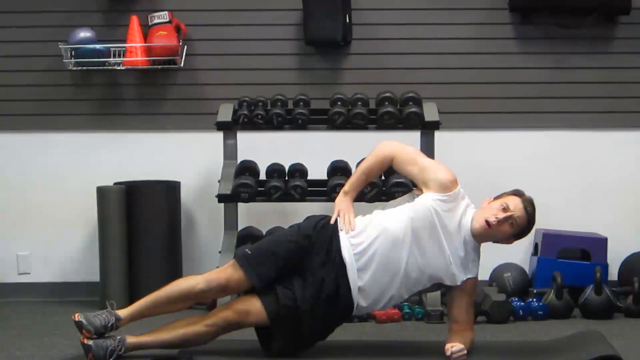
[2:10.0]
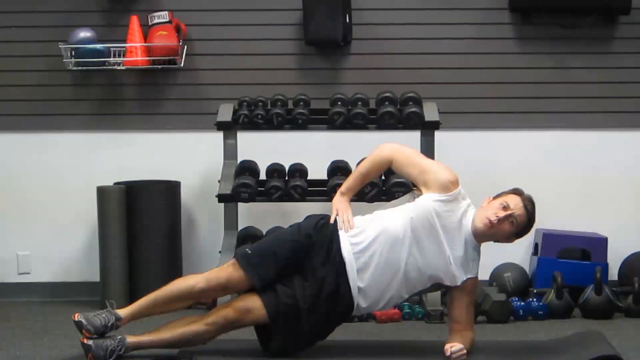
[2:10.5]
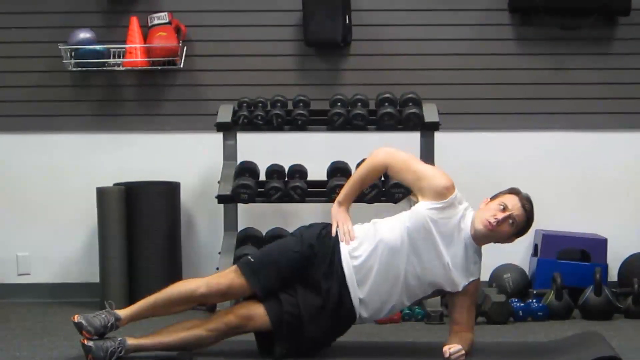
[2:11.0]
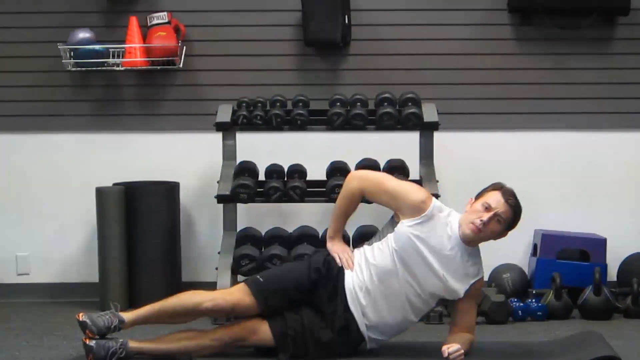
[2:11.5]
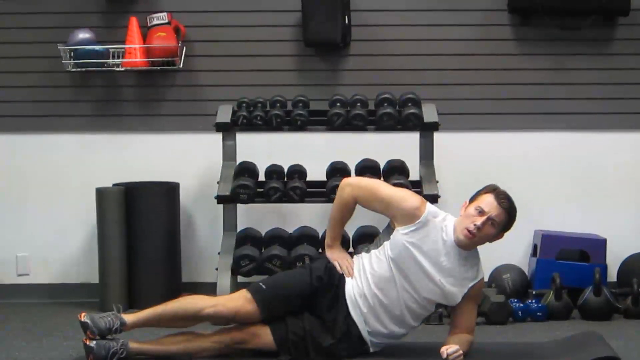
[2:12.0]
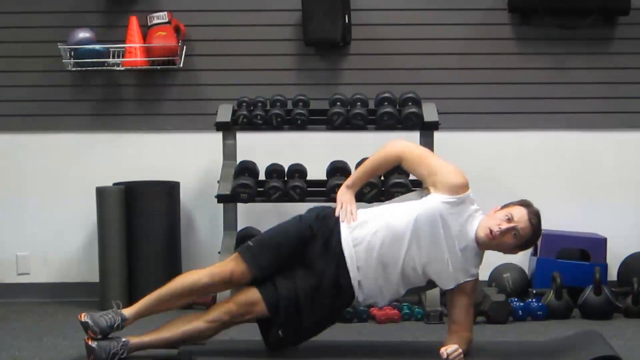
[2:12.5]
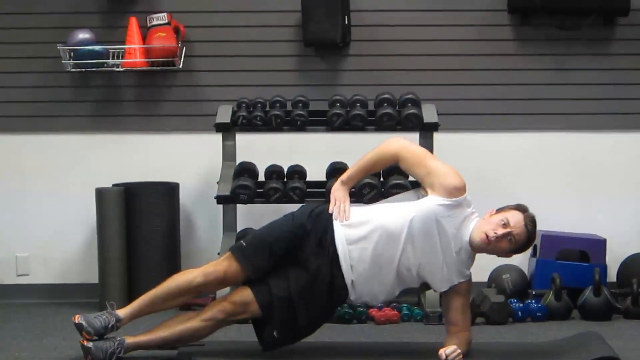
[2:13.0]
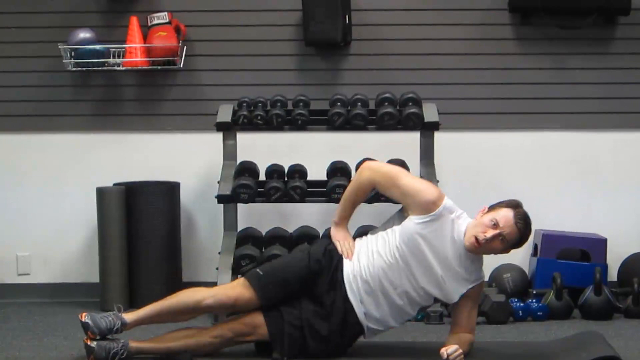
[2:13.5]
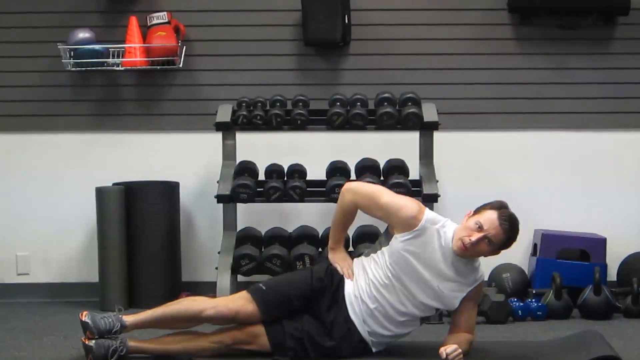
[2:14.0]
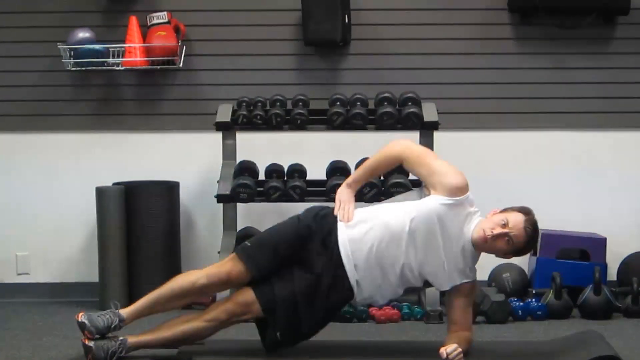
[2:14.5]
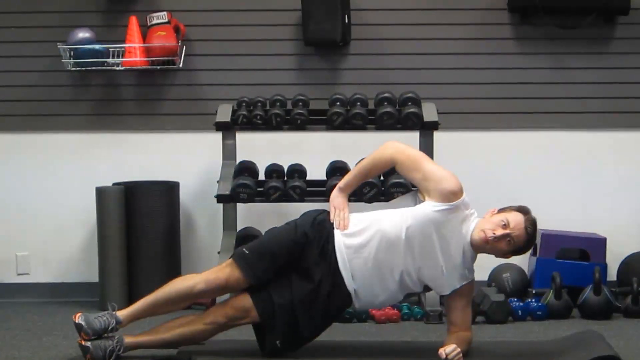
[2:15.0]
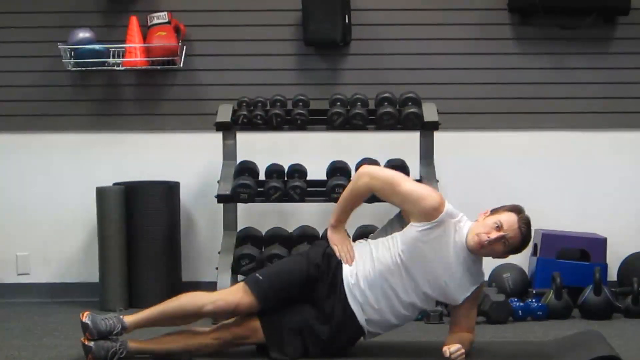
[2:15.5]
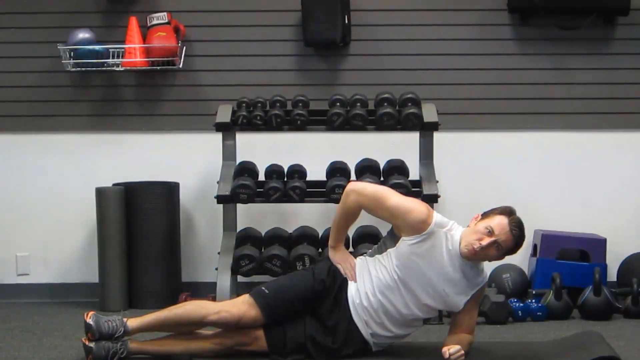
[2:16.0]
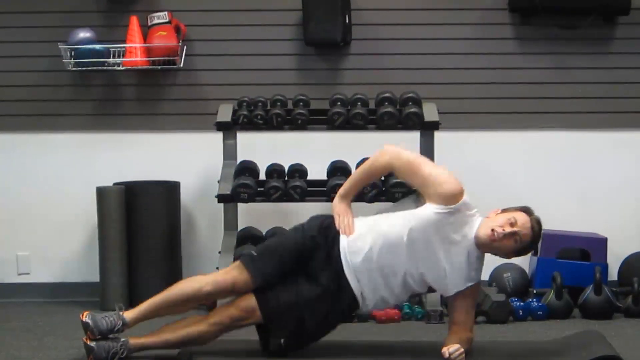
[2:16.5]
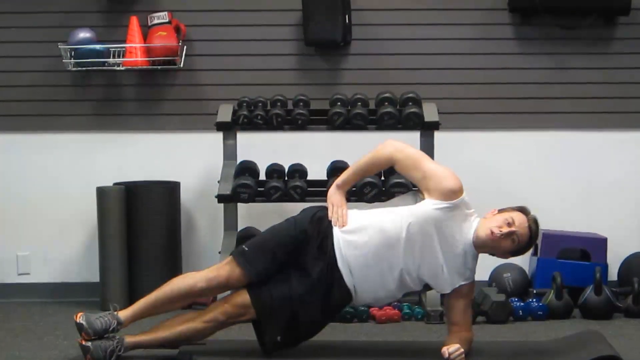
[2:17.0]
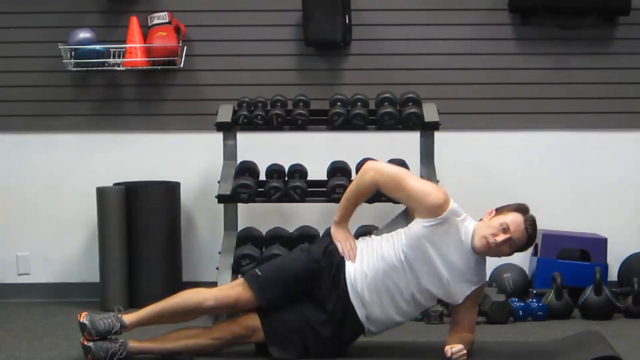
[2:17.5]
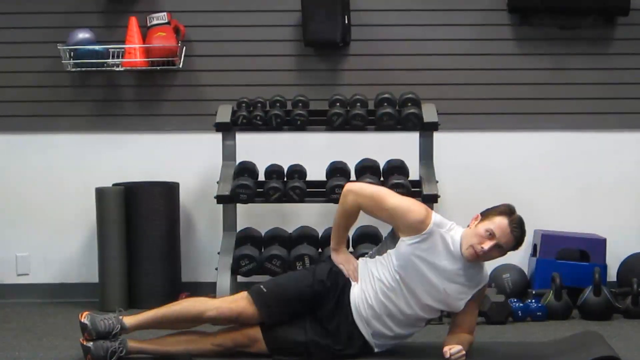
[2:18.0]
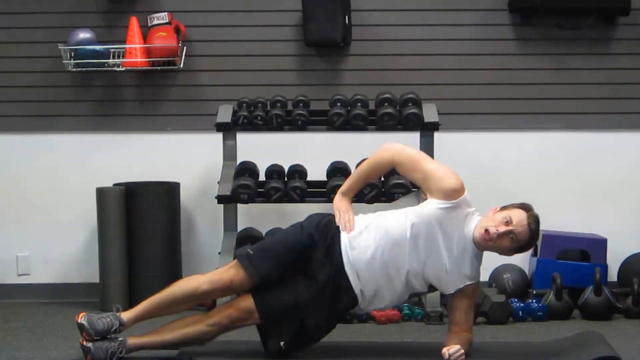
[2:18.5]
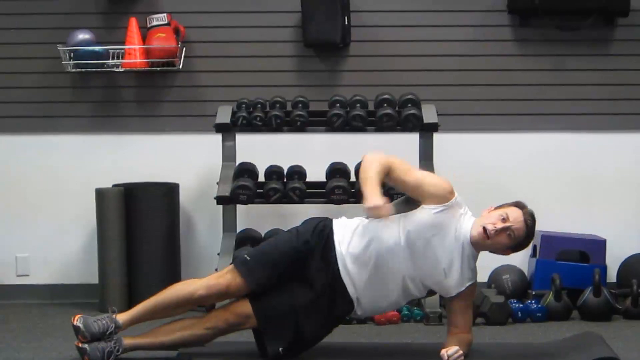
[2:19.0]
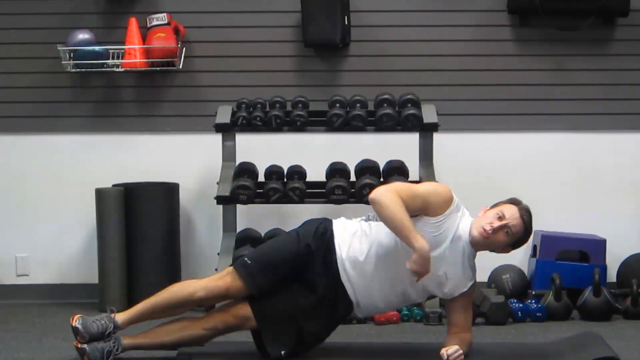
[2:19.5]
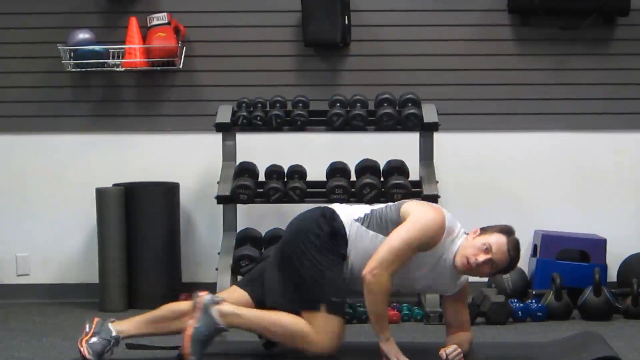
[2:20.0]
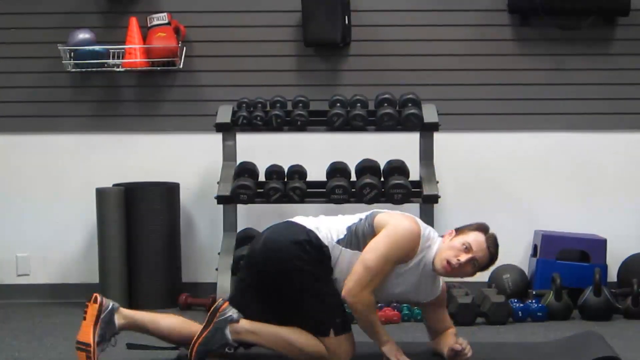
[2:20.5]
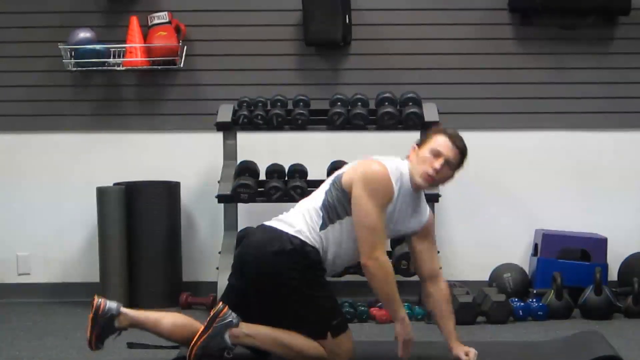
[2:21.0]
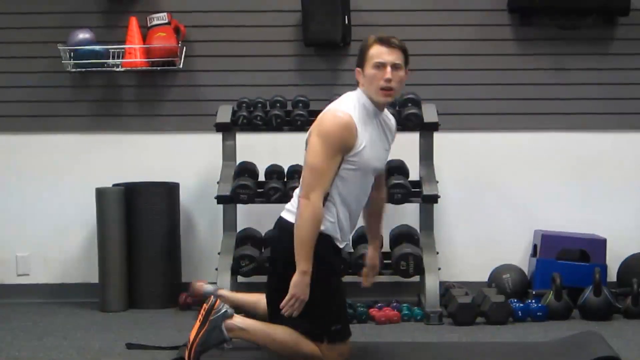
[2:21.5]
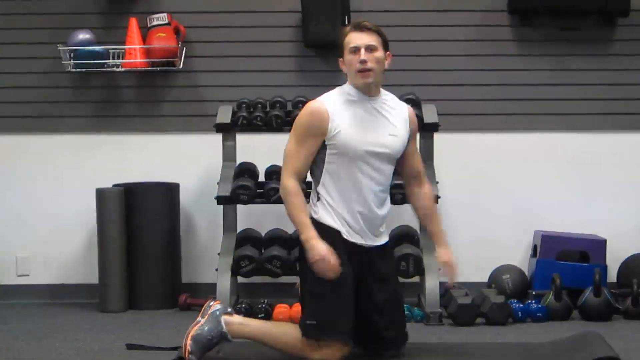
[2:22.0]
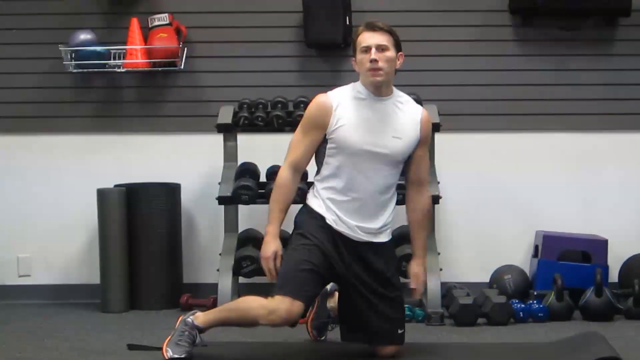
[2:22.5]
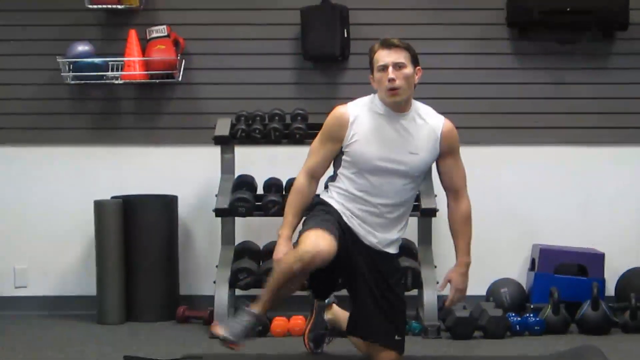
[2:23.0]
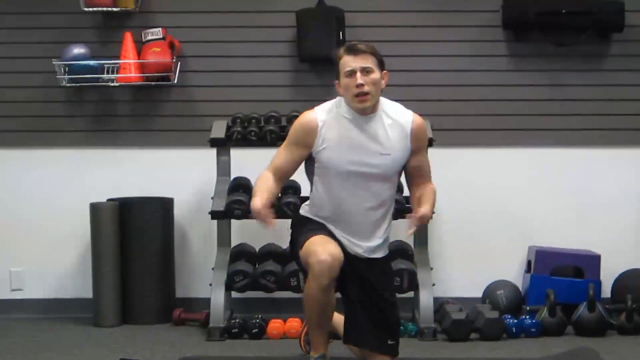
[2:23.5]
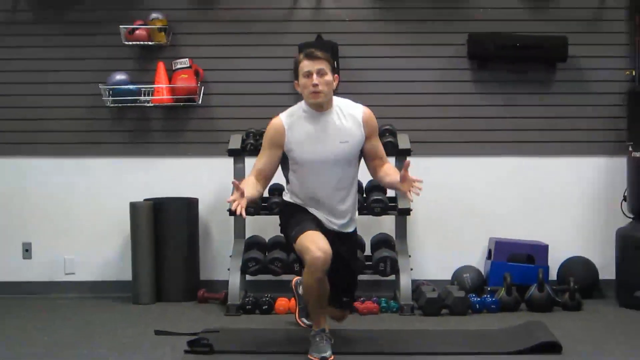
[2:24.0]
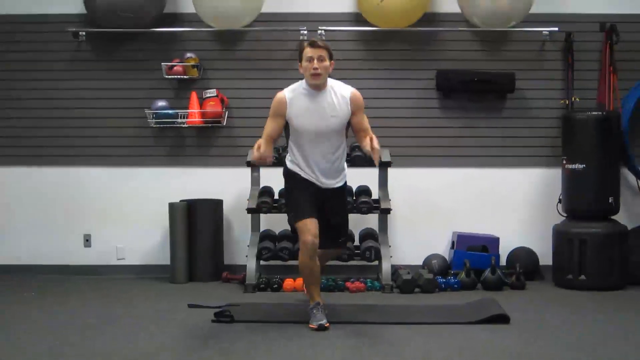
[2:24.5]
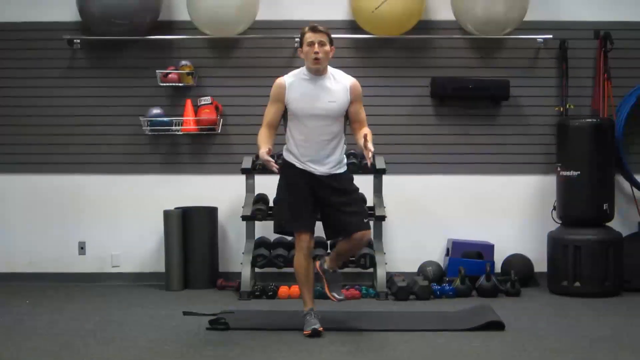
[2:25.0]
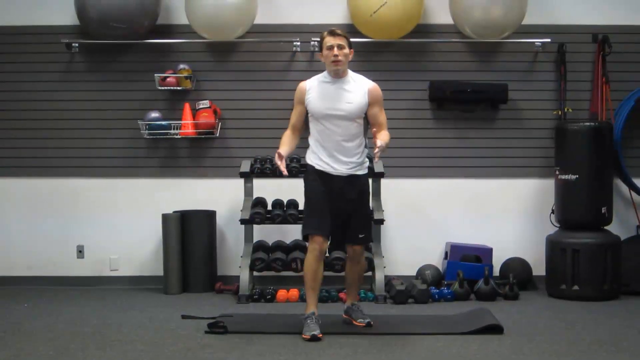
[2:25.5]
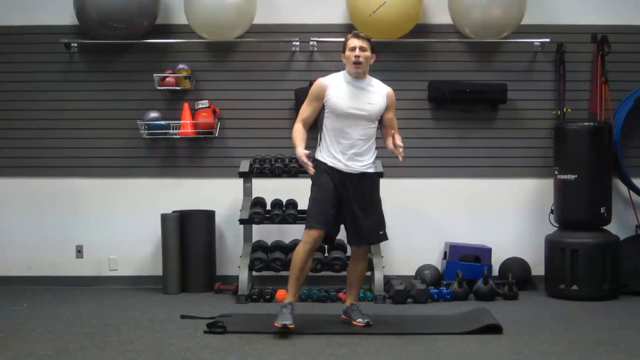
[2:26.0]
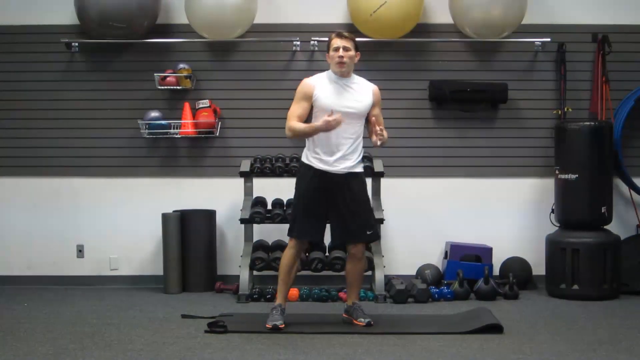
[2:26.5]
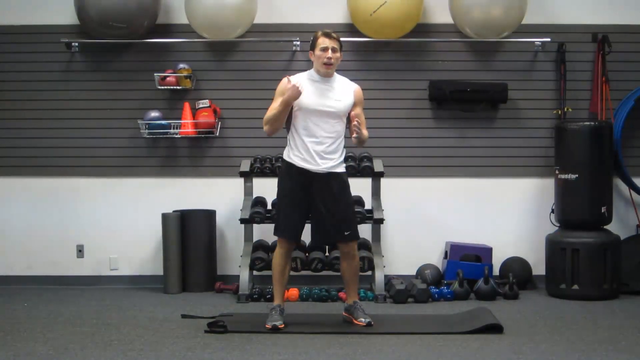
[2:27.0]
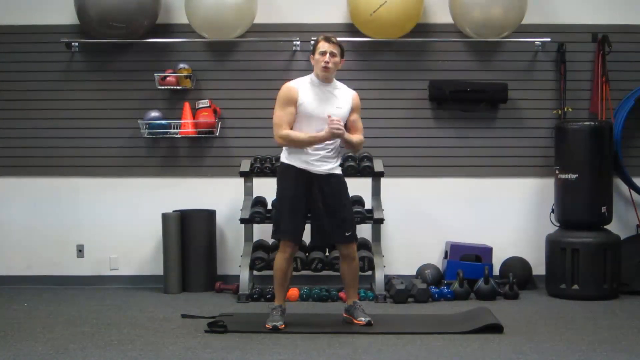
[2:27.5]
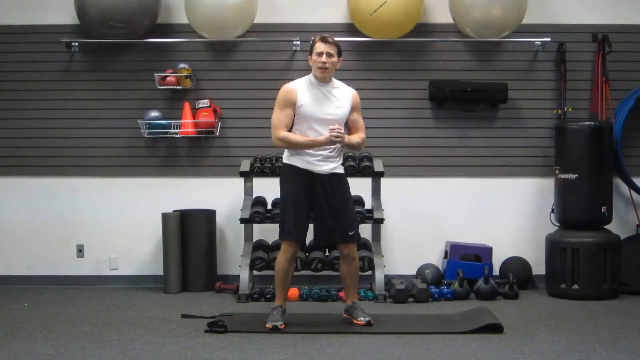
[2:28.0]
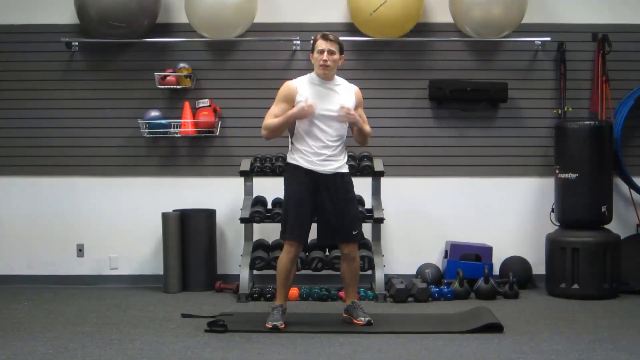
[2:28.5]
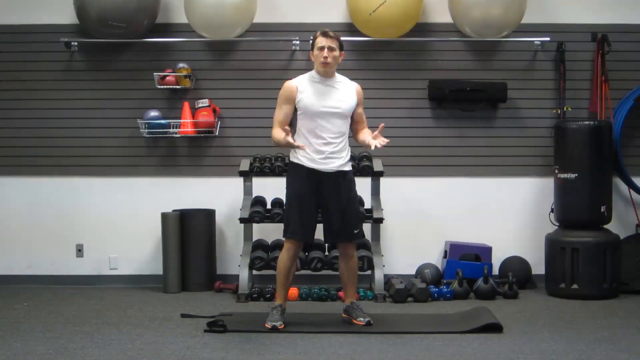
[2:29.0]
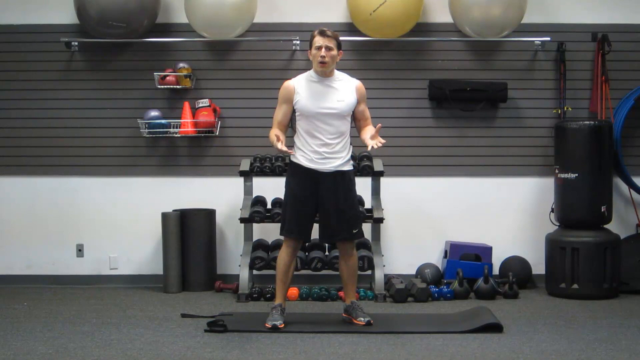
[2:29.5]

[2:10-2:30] On his side, the man rolls his eyes up, his arms locked in an L shape with his hands fully on his right hip. He bends his hip downward toward the ground and pushes it back up, using his left arm to support himself, in what seems to be some sort of hip thrust. He then turns his body sideways, pushes toward the ground and uses that to support himself standing up, pushing his knees up and using his left knee for support until he fully stands. He uses both hands while explaining the workout, putting his right fist into his left hand.